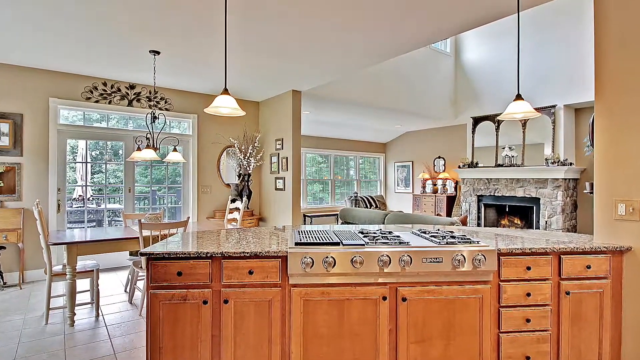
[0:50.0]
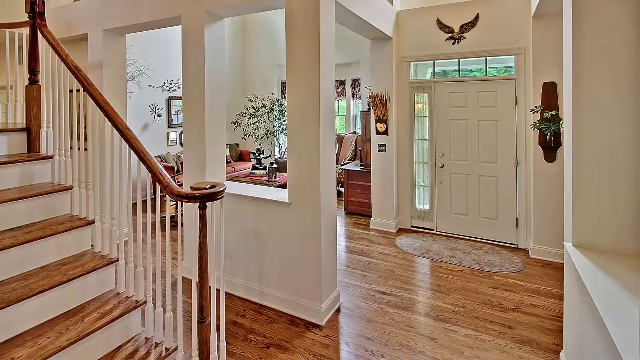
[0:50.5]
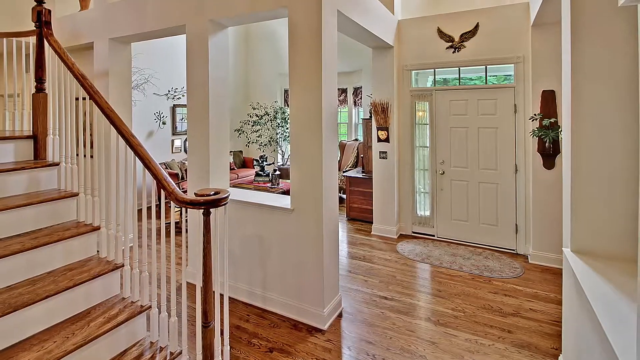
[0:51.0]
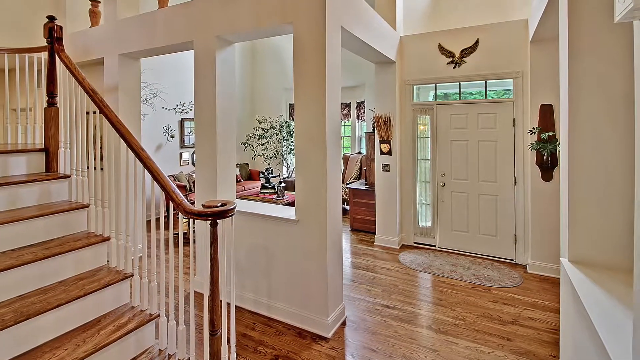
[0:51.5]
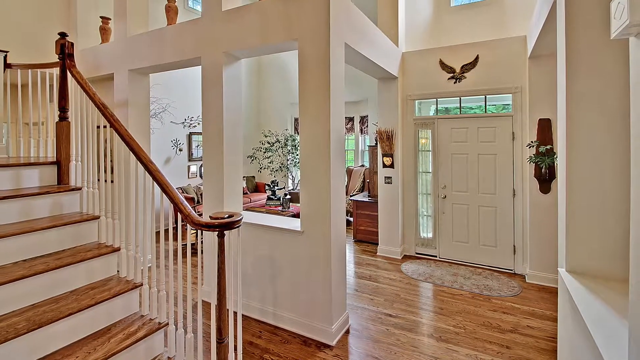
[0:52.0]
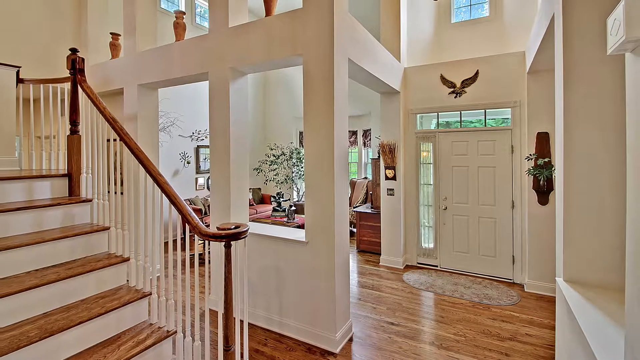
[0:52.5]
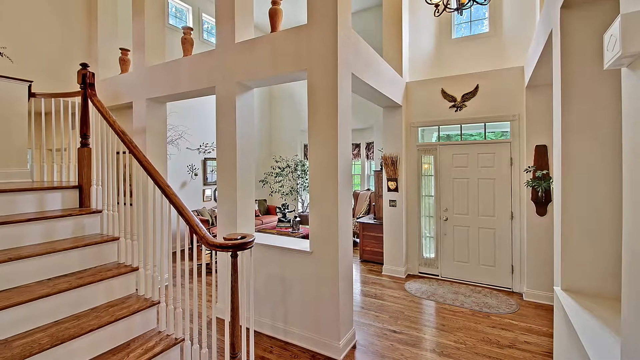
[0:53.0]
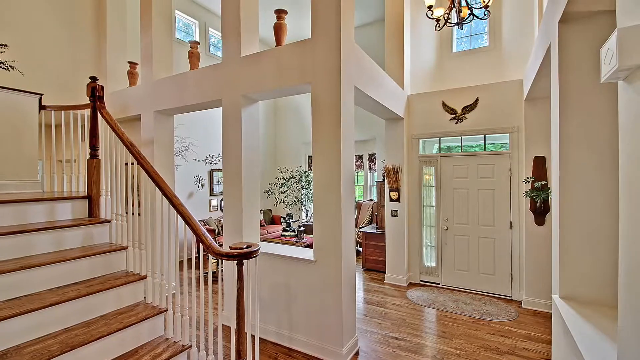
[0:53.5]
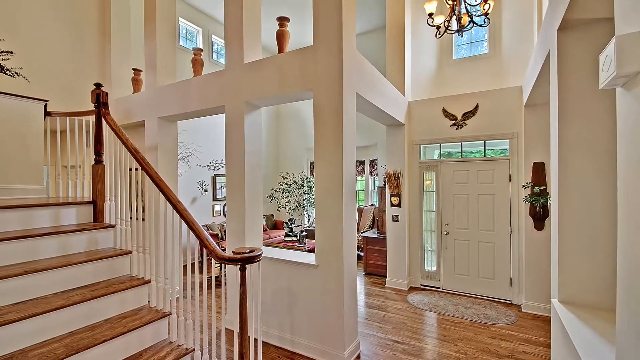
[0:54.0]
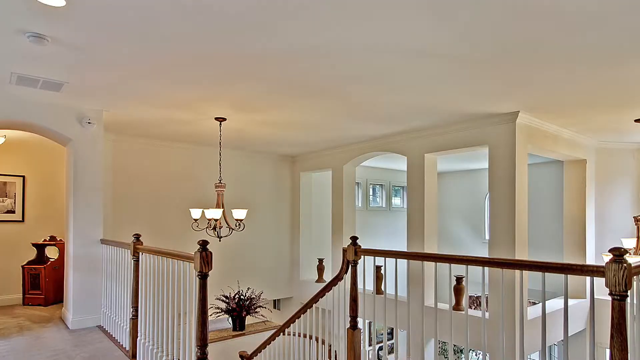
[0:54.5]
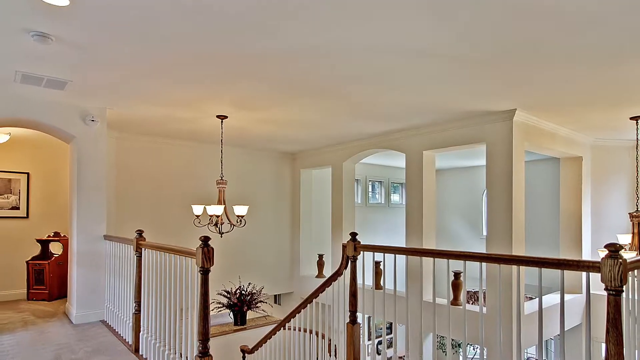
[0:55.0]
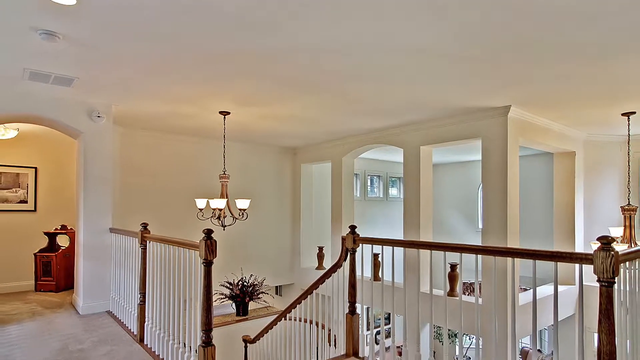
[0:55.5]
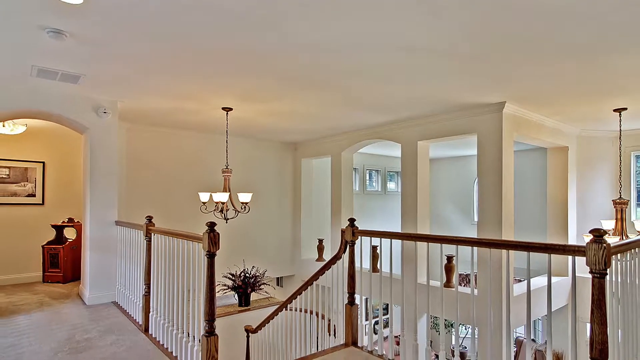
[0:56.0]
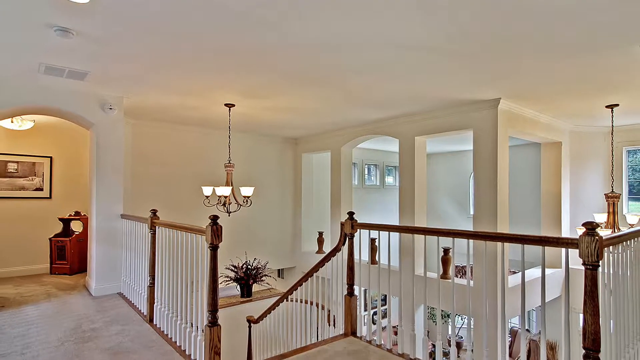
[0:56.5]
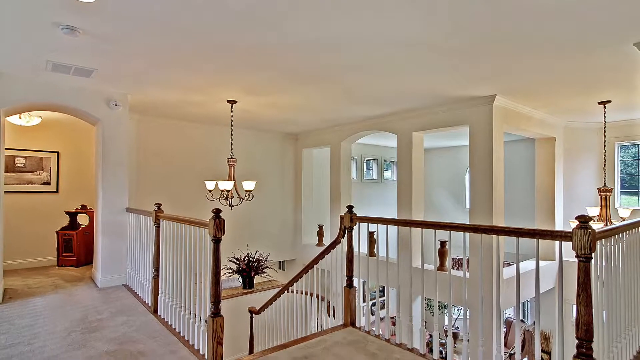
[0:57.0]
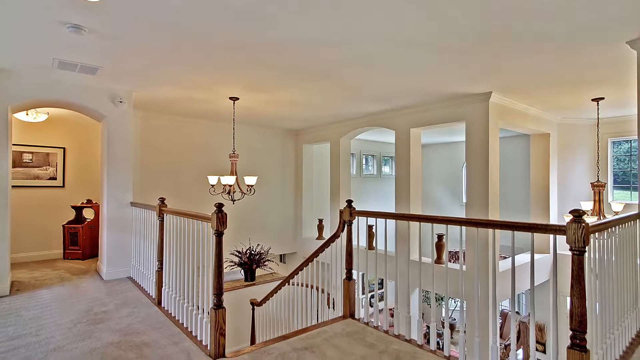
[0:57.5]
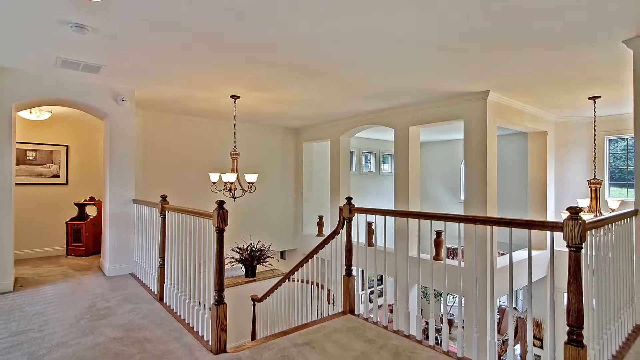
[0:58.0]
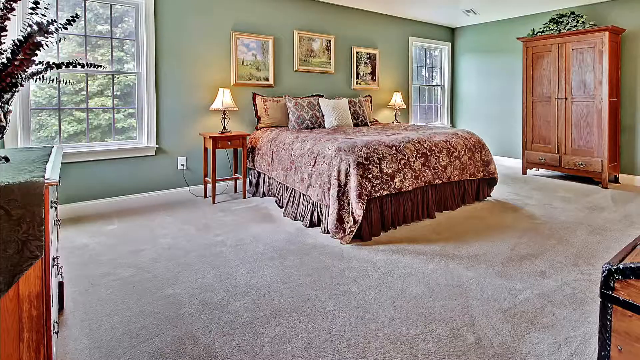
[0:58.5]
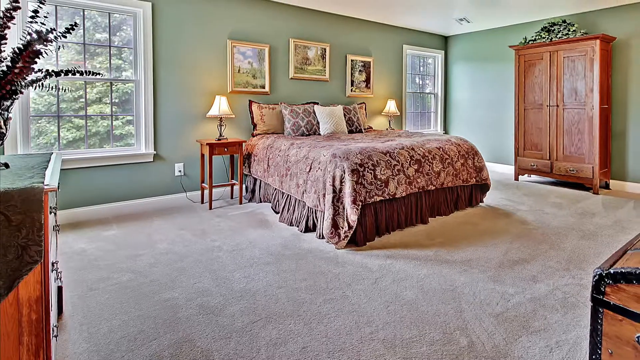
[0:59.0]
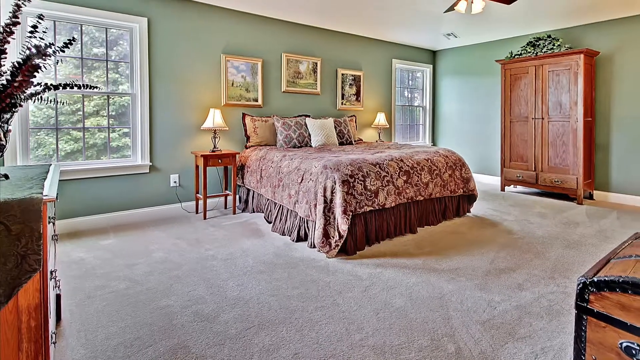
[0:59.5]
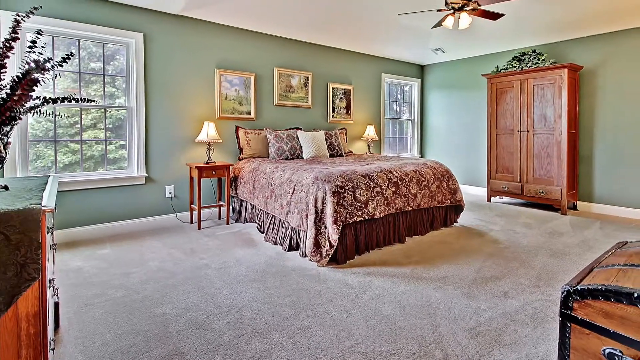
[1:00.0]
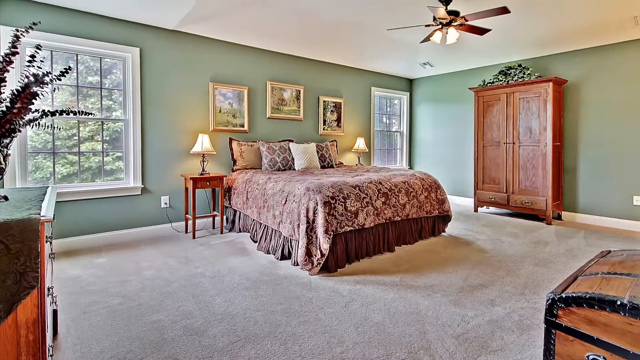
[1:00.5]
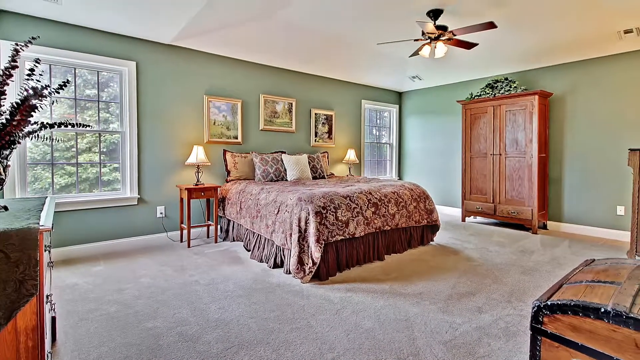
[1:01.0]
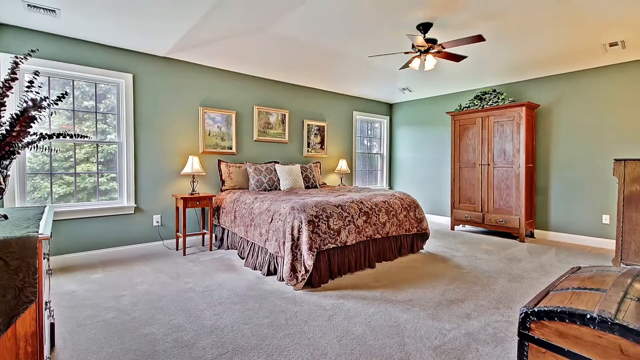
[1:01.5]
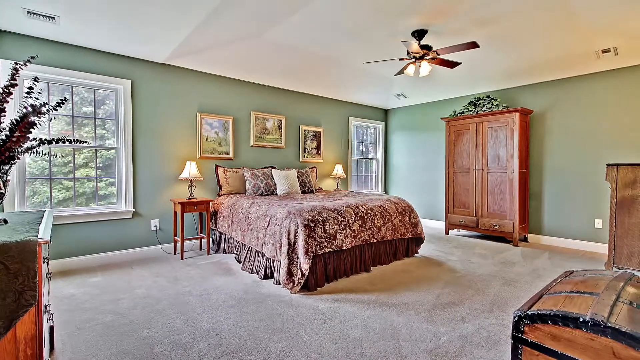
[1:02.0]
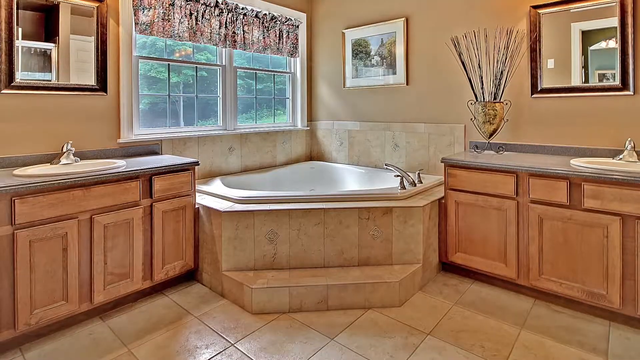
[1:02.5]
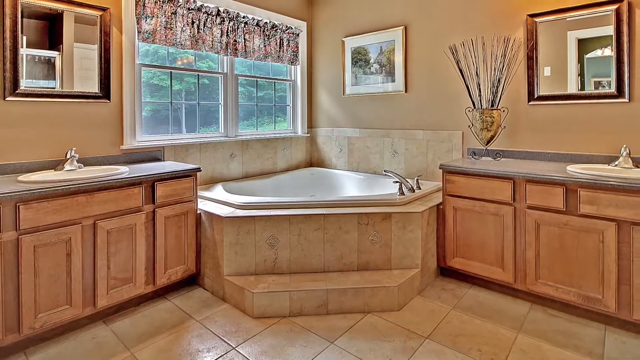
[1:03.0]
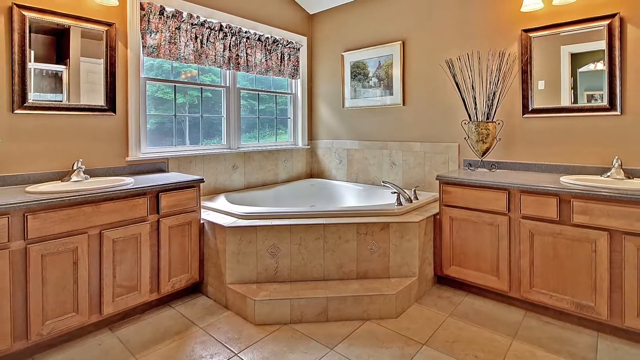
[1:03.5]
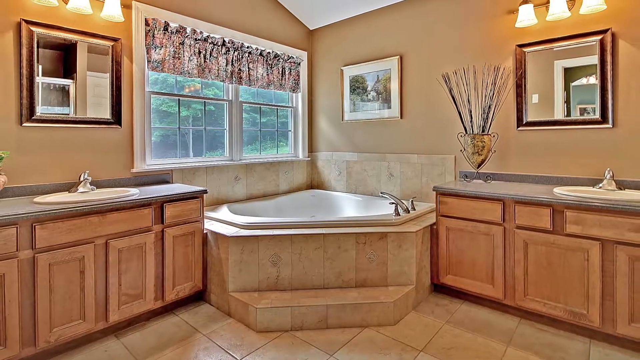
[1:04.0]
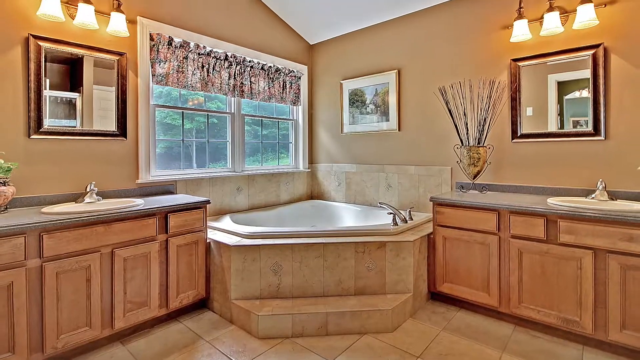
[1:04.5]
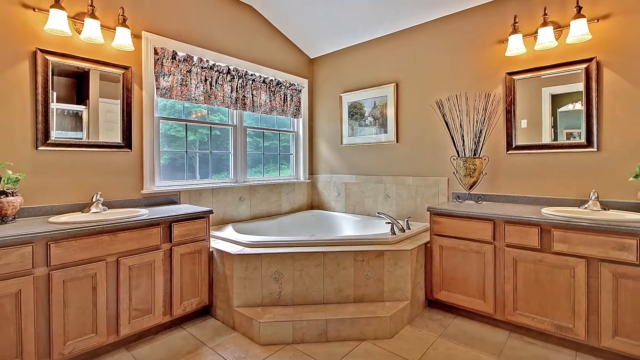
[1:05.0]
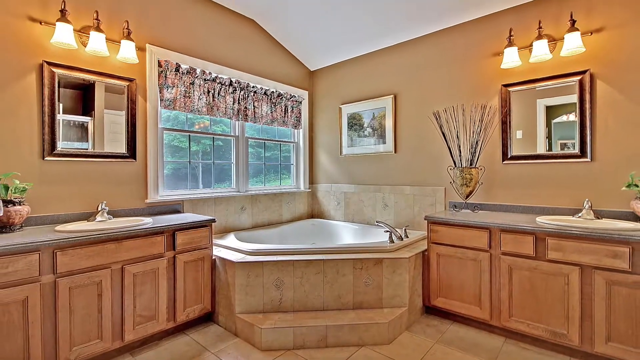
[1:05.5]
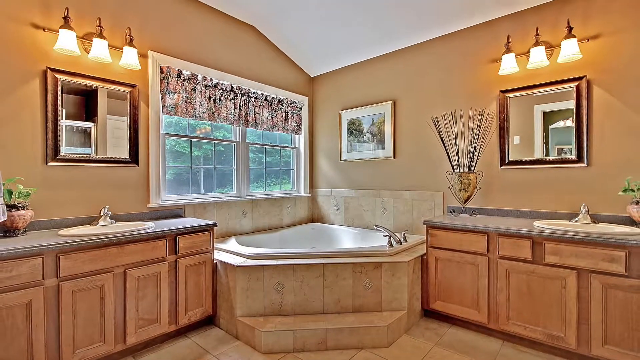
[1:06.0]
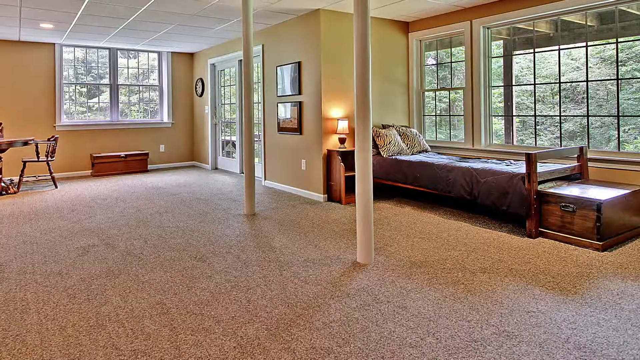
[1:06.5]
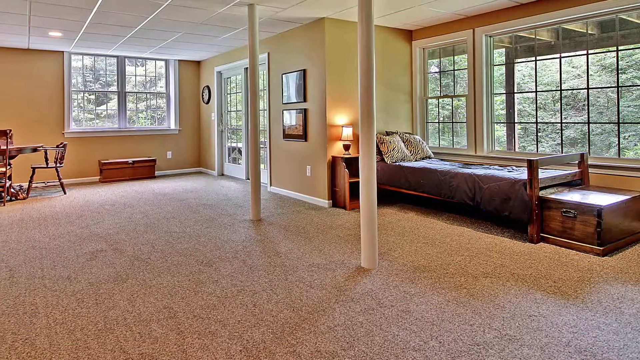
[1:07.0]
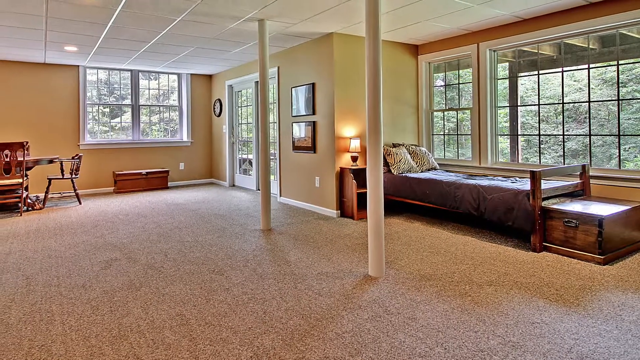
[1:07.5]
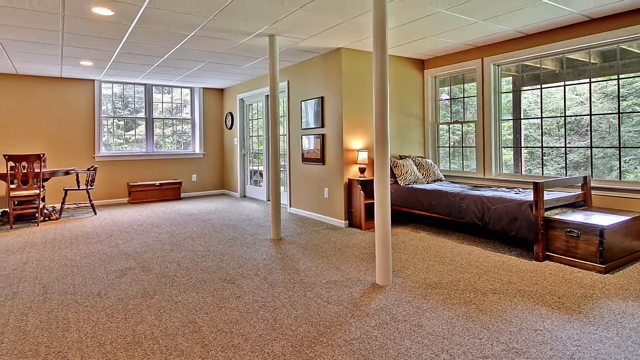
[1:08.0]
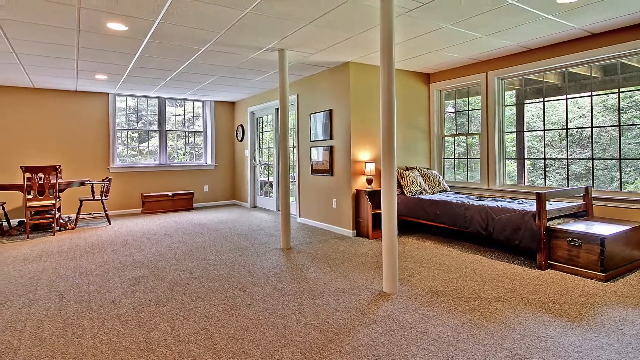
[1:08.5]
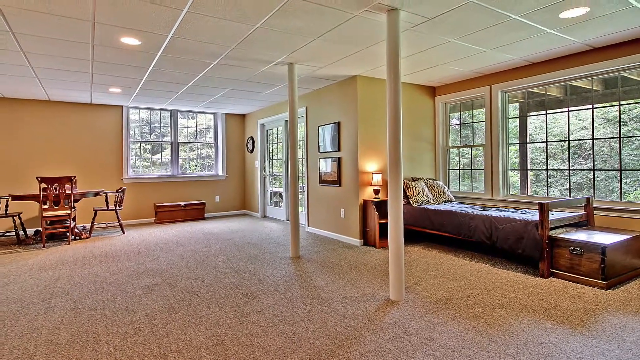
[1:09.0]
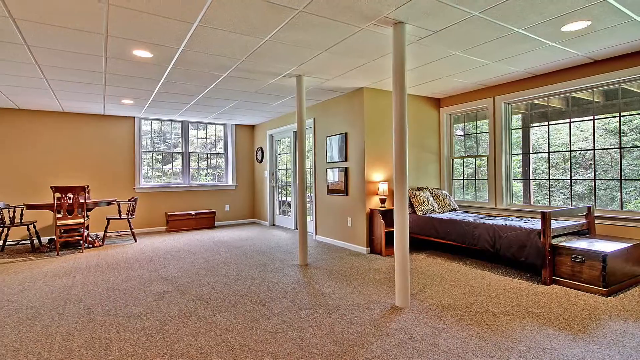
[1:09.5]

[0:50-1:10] In the brown kitchen with the island stove, lights hang down on poles and shine over the kitchen. The camera then pans to a bird-looking thing above the door to the outside. There are a lot of flowery things and brown trim, with vases up on part of the stairway. Upstairs, there is what could be a hallway to a bedroom. The lighting gives it a kind of brownish-tan glow; the ceilings are white, with chandeliers. In a bedroom there are green walls, a brown cabinet or closet, a big queen- or king-sized bed, gray or white carpeting, a footlocker-looking thing or chest on the right of the screen, and white-trimmed square windows. In the bathroom there are two sinks, one on each side of a triangle tub, with a mirror above both sinks. The curtains kind of have a floral pattern, and the room has brown accents and a white ceiling.